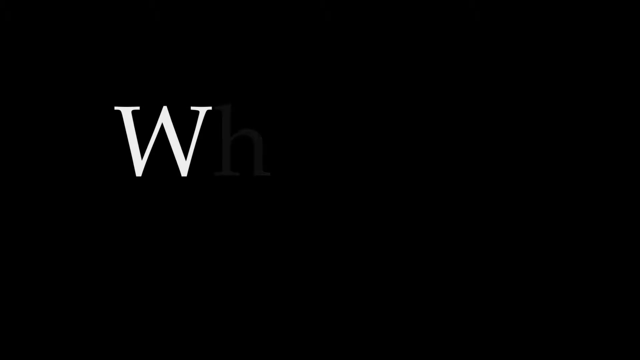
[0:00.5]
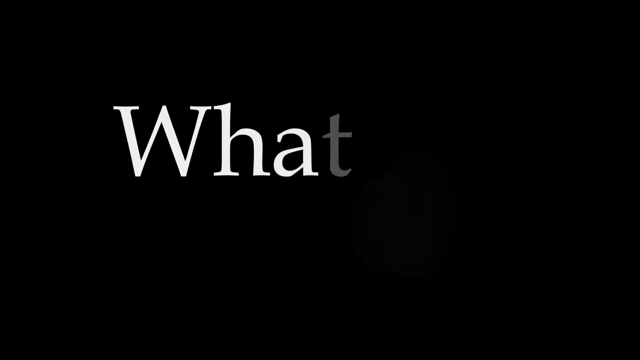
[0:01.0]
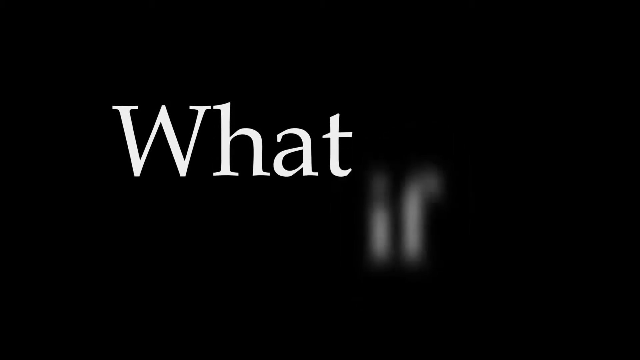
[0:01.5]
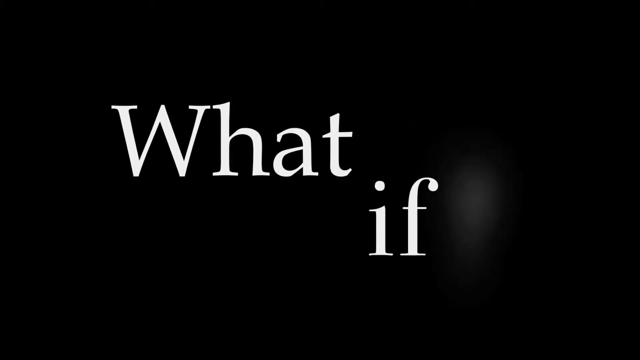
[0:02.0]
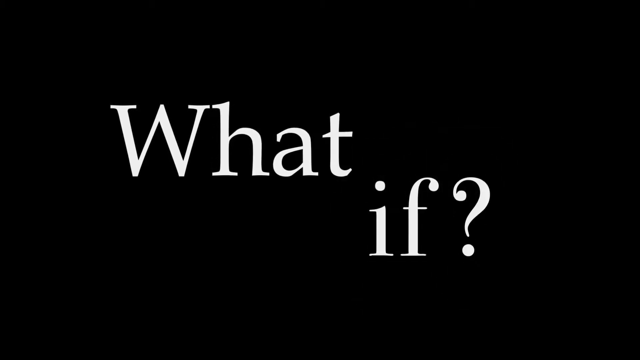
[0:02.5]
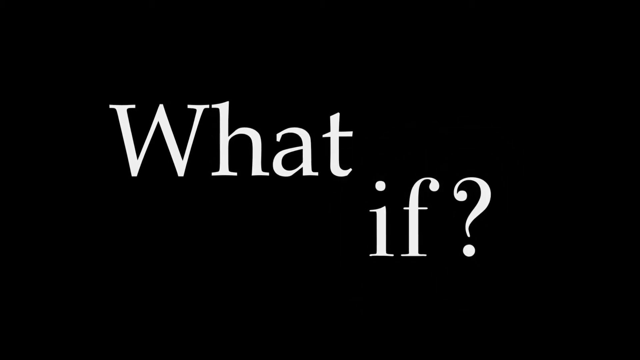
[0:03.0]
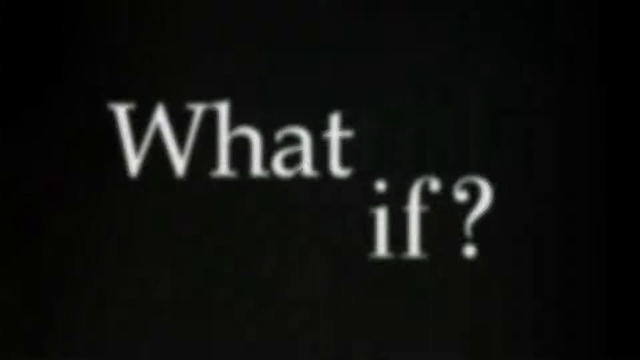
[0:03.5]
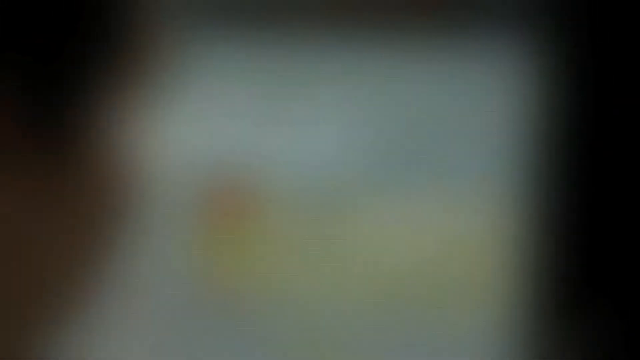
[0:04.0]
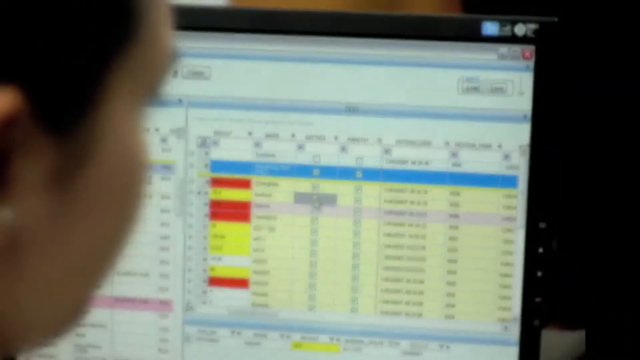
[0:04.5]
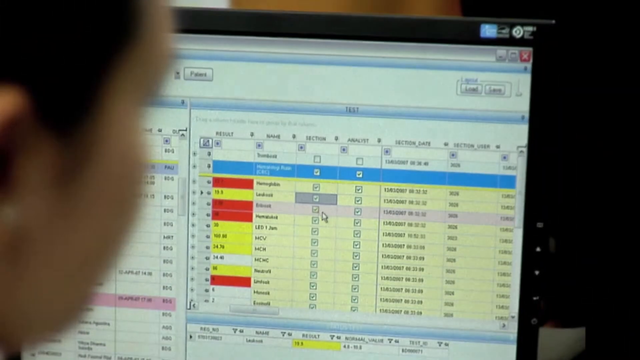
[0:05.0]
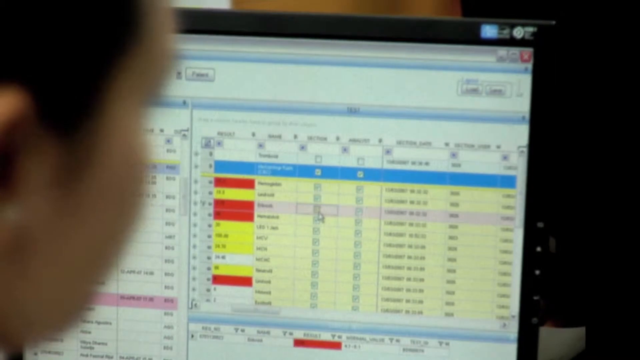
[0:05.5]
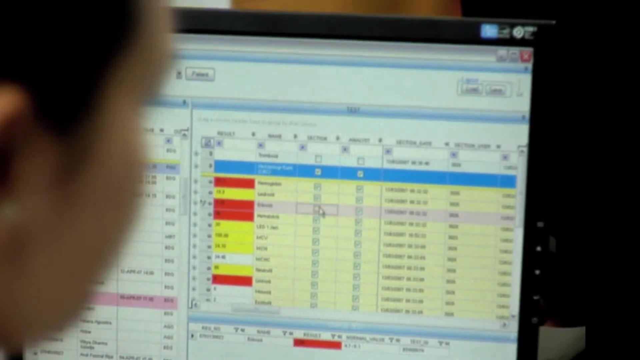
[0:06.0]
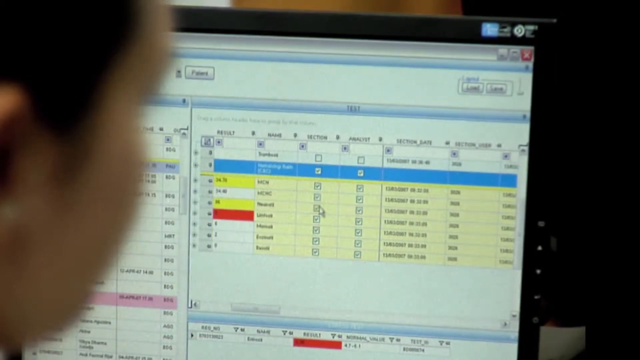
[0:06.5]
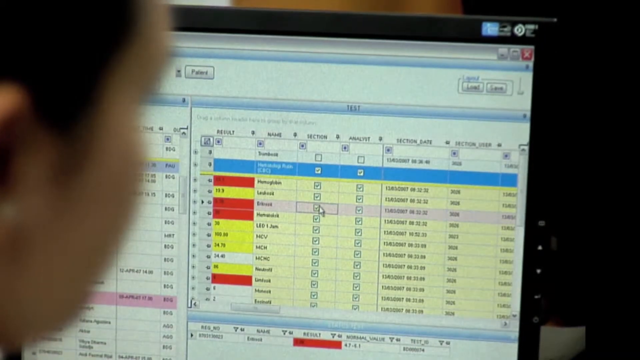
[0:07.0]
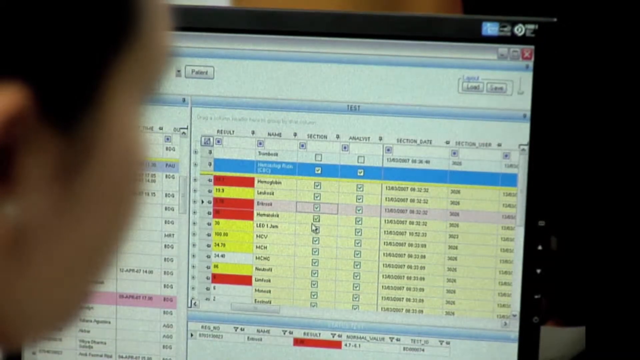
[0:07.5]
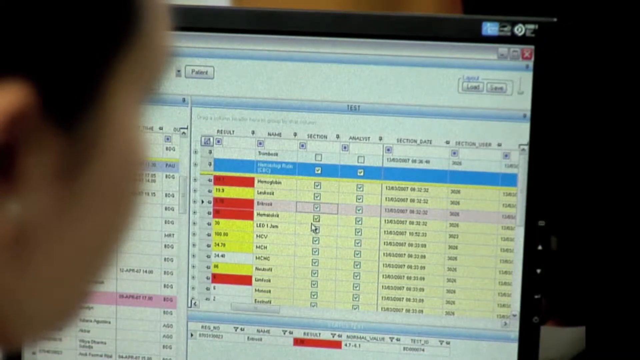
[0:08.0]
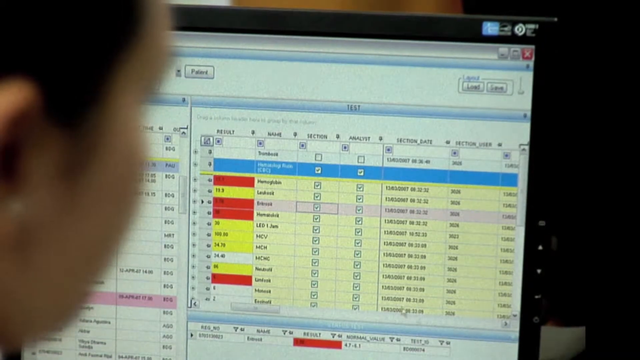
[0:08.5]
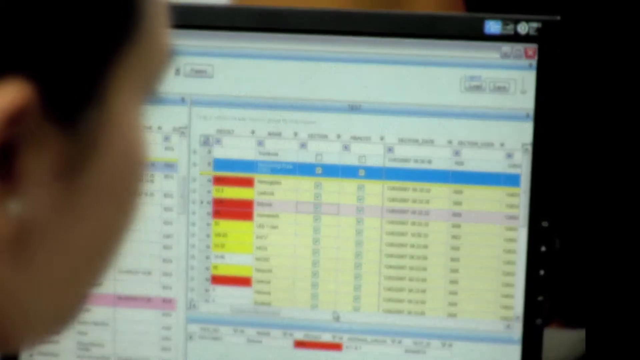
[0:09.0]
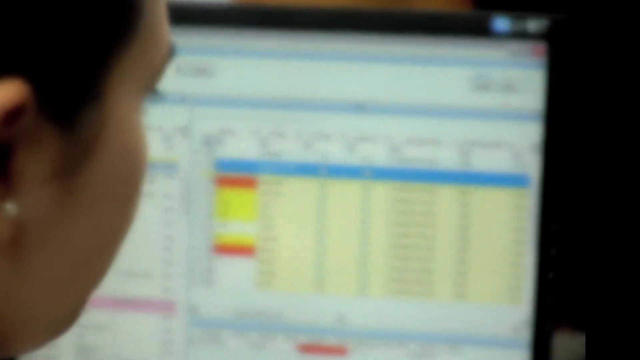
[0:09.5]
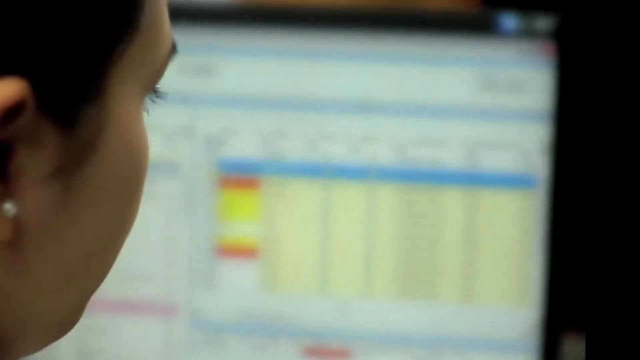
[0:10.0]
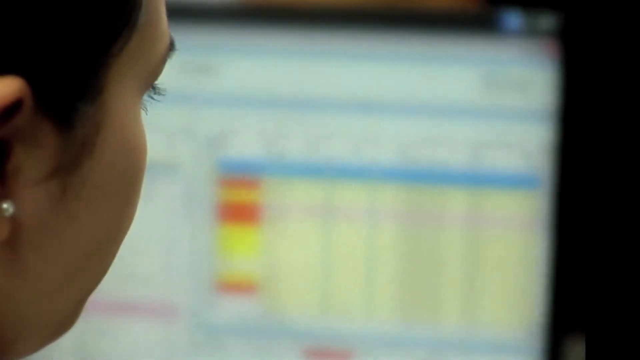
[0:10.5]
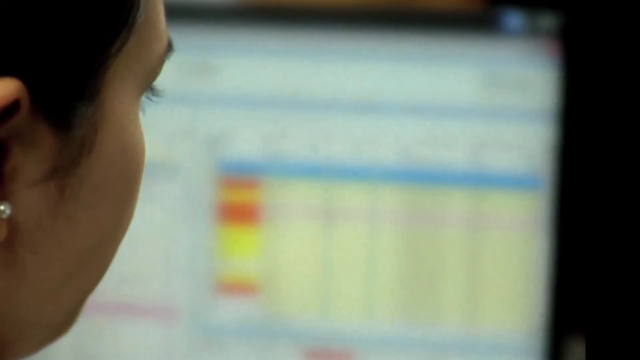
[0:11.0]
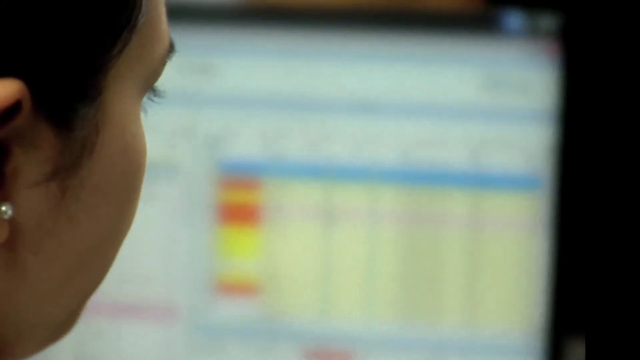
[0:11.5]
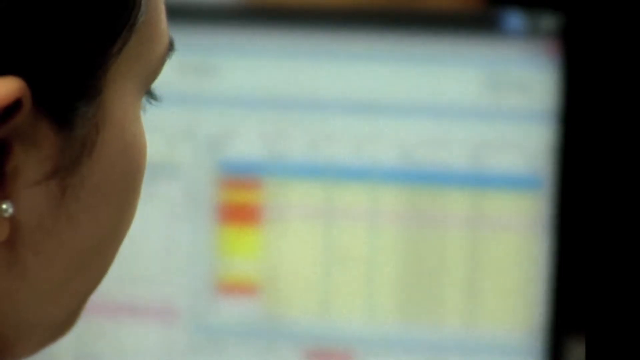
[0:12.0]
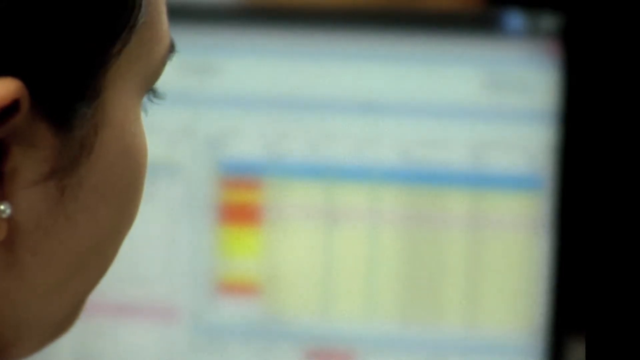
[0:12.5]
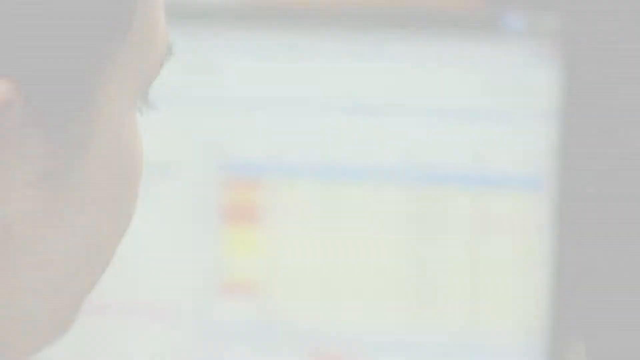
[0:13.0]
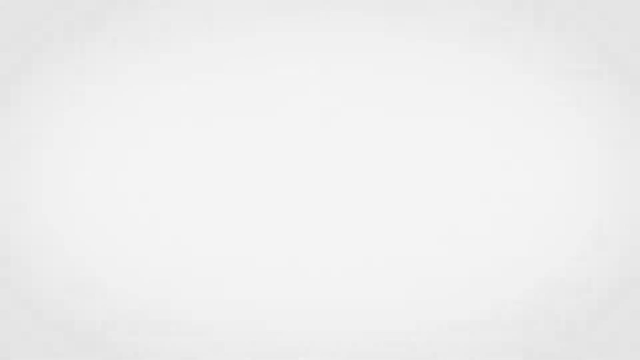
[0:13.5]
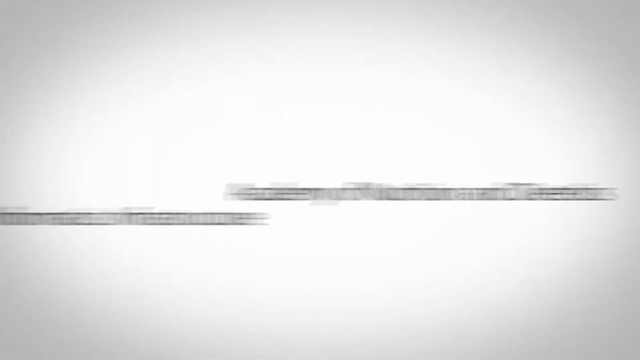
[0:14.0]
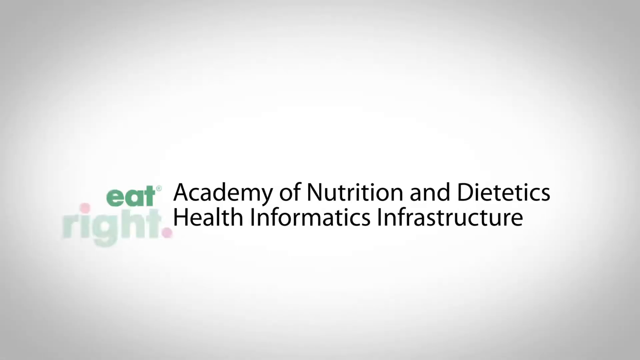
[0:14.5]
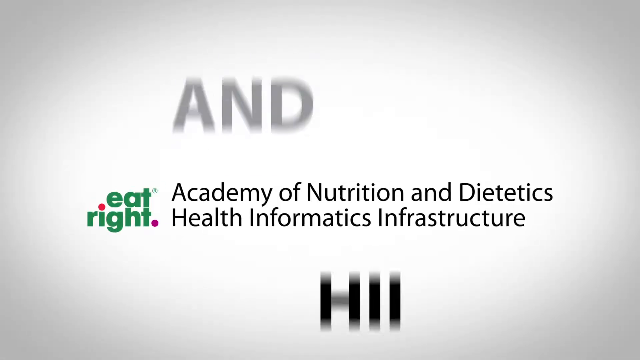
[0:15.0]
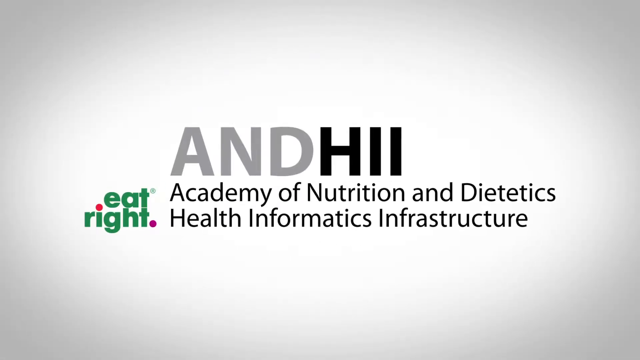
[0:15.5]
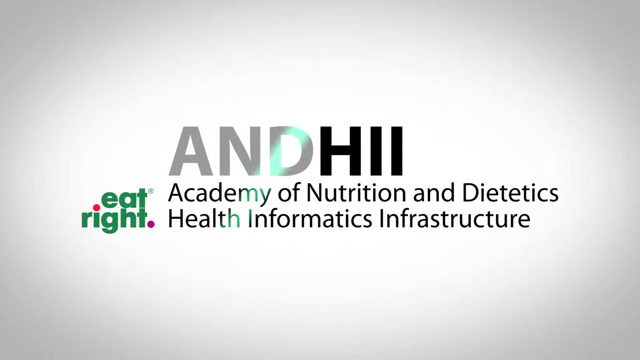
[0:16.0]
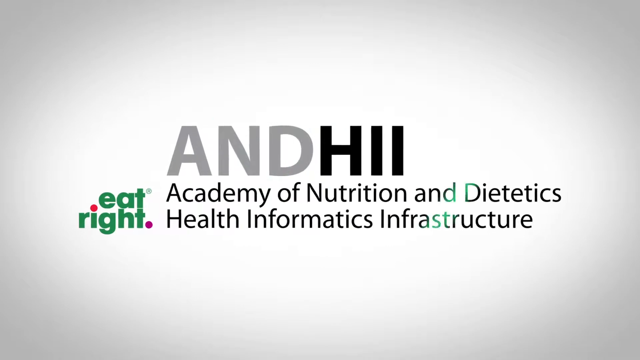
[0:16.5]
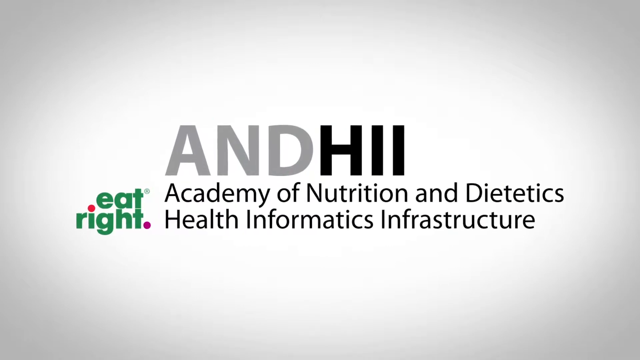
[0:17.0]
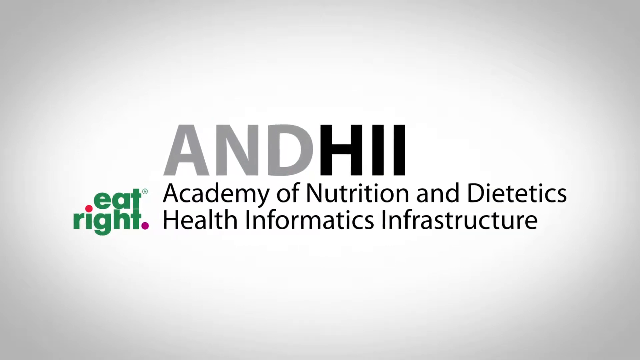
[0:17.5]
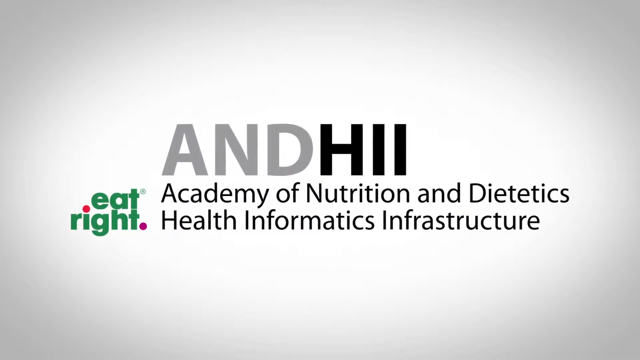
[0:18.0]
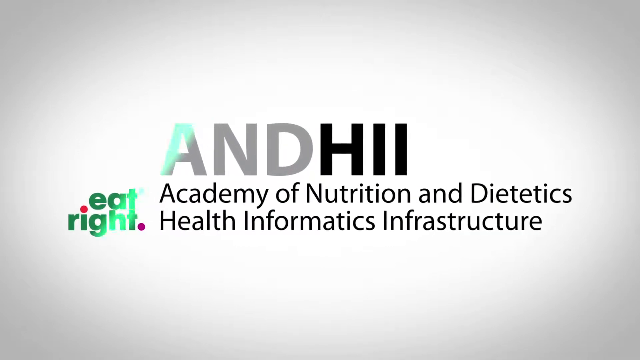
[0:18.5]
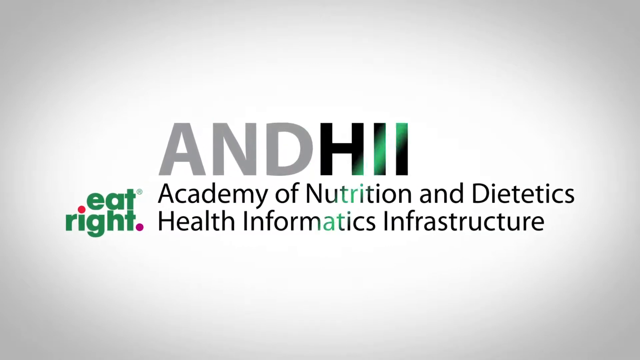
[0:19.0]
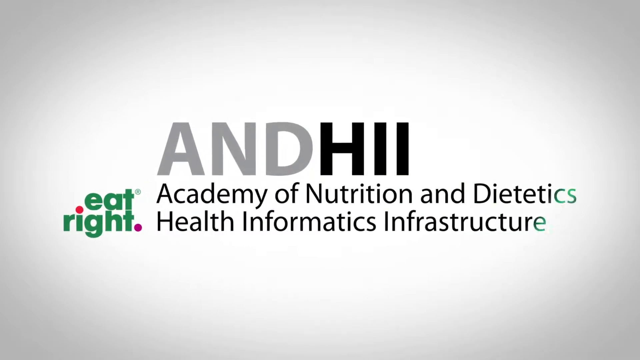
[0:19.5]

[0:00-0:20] The video opens on a black screen, and the words "what if" slowly appear in large white letters, followed by a question mark. This fades into a screen with a black background, and then a computer screen showing what is probably some kind of medical test, with different values on it. A young person with dark hair pulled back, apparently a young woman, wears one earring that looks like a little white pearl. She sits looking very seriously at the computer screen. The screen has a blue line at the top; on the left there is a short red line, some yellow lines, and red underneath; to the right is a page background with a lot of dark print on it.